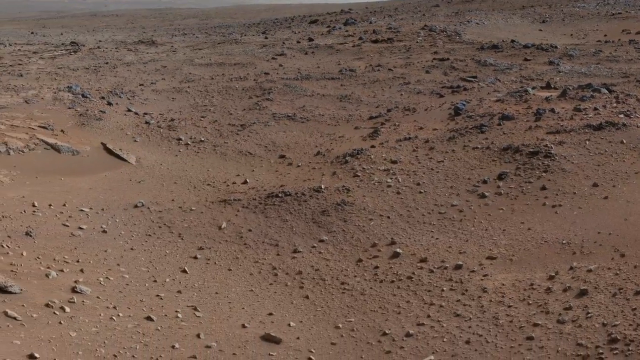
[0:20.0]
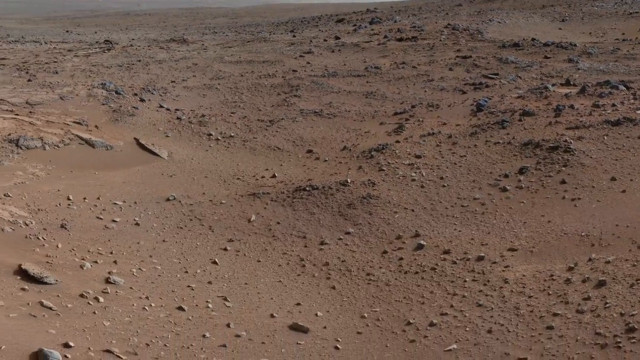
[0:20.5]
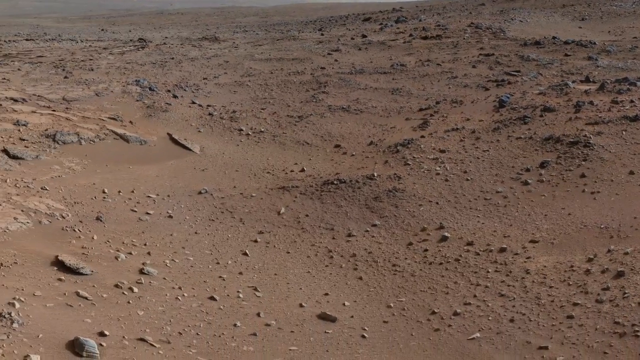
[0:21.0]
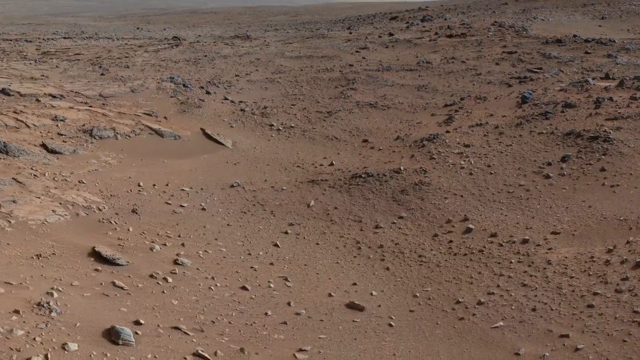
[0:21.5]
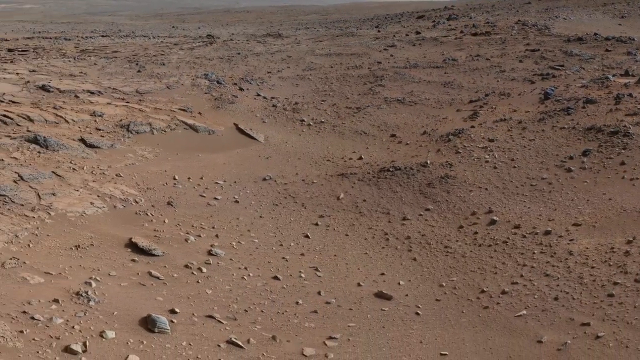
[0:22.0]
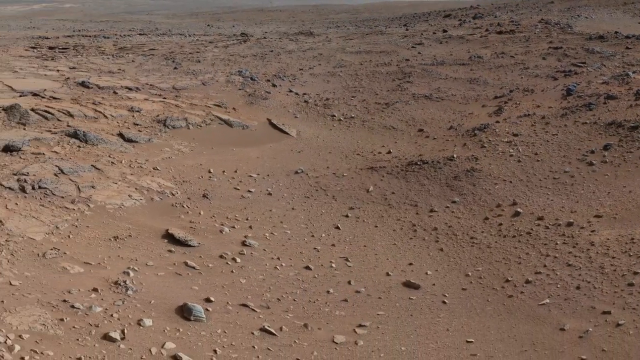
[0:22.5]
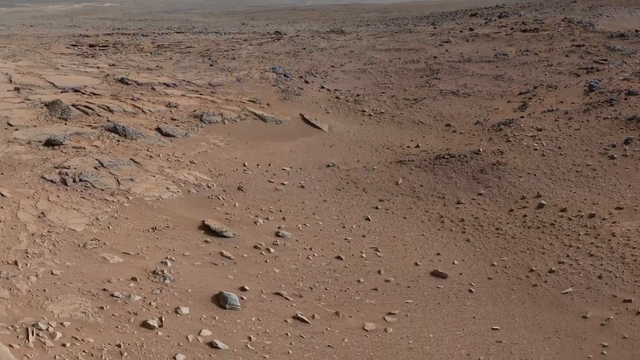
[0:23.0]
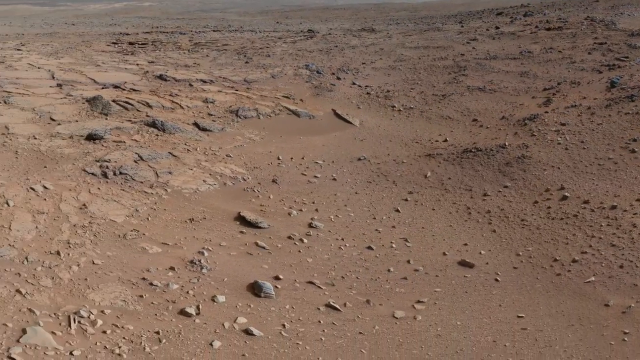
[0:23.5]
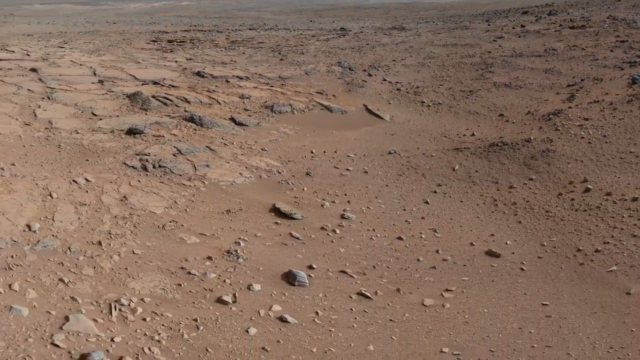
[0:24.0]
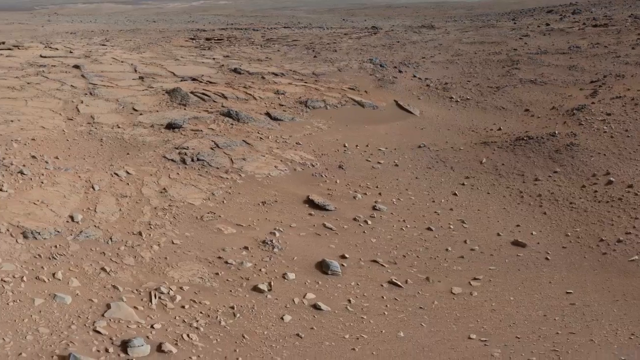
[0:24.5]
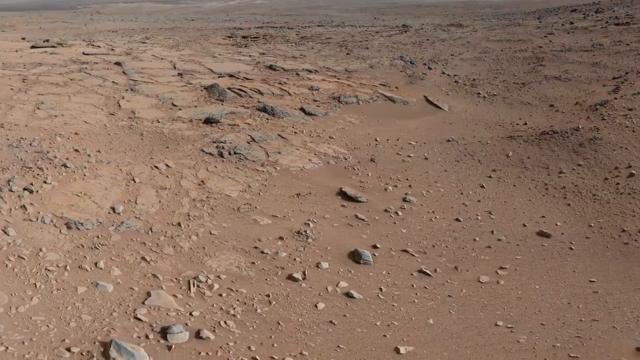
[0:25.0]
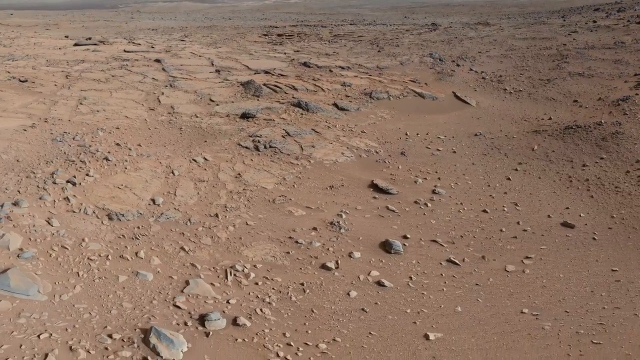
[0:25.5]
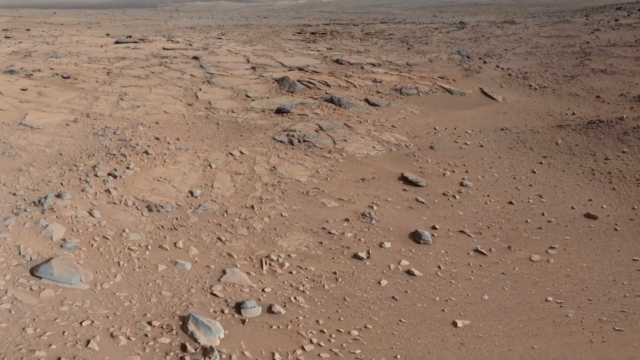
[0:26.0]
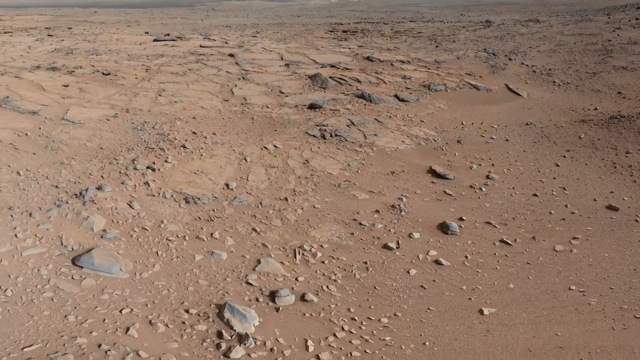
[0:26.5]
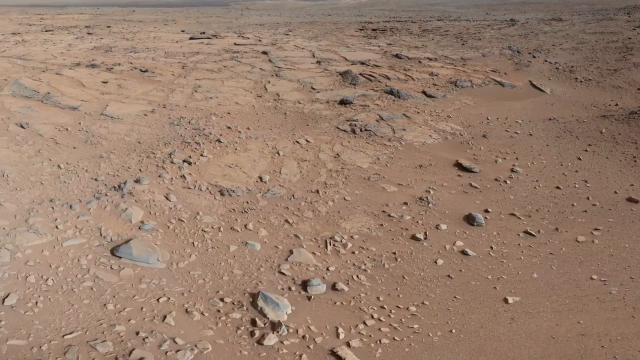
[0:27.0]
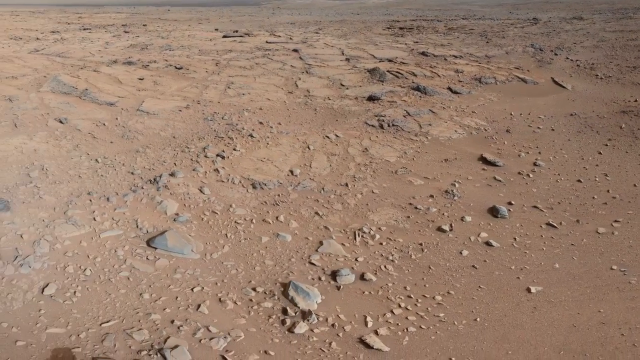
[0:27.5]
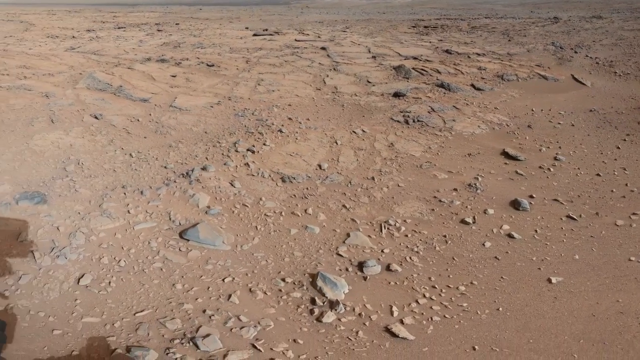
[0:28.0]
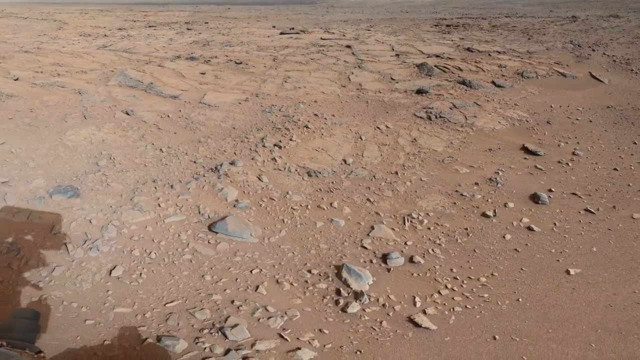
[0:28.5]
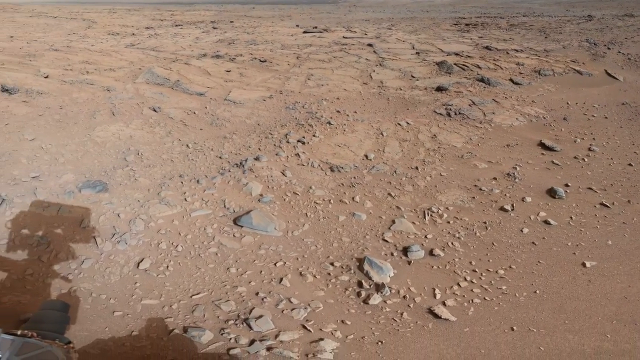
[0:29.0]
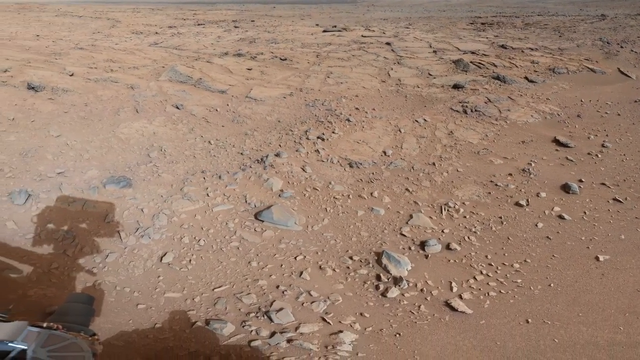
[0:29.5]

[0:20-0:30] The camera pans over Mars, showing a barren field of rocks and dirt. The surface is reddish-dark brown and looks like cobblestone. The picture gets lighter toward the left side, where the sand looks whiter, and in the last moment the rover's shadow is visible at the bottom left.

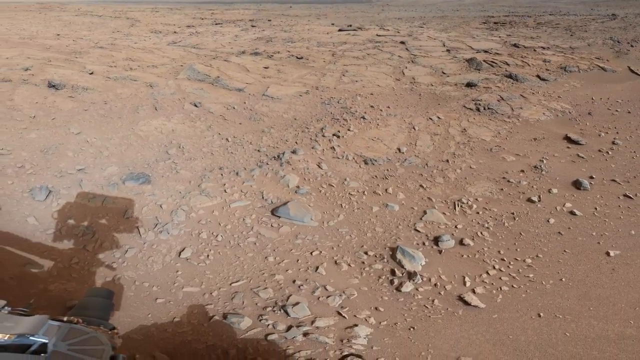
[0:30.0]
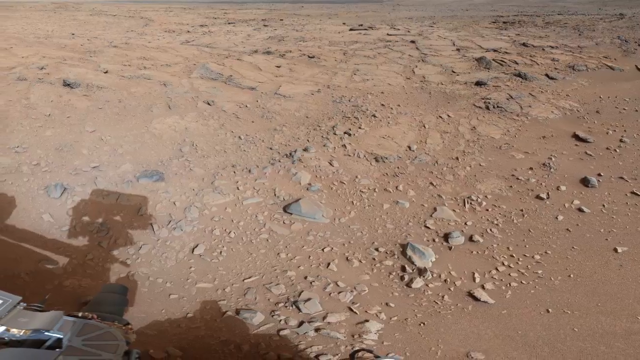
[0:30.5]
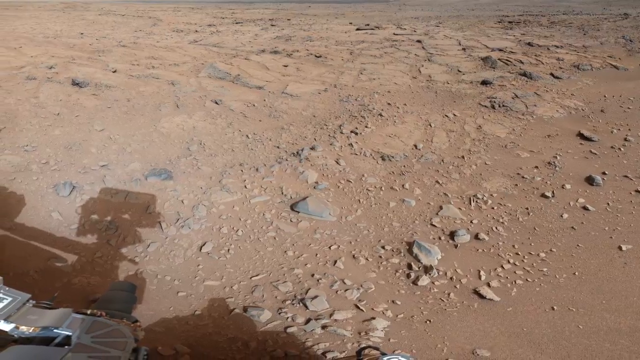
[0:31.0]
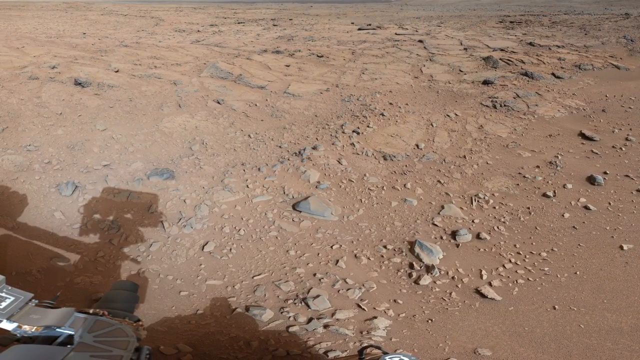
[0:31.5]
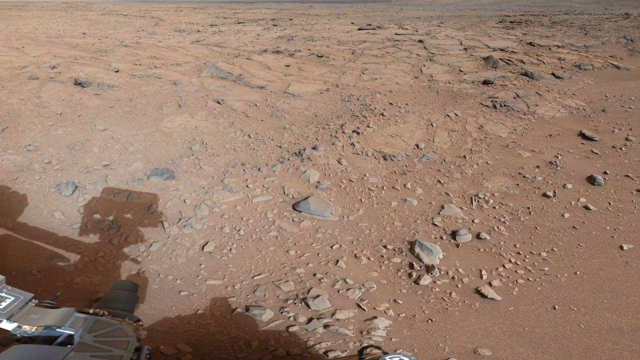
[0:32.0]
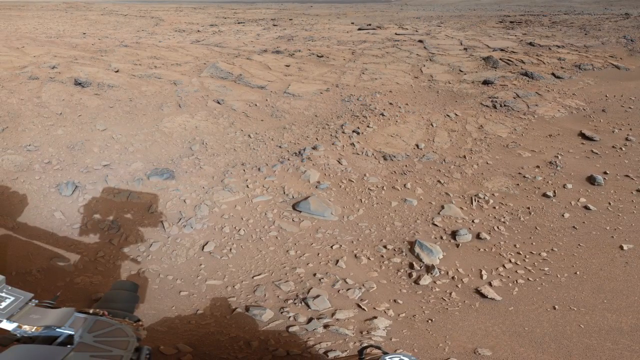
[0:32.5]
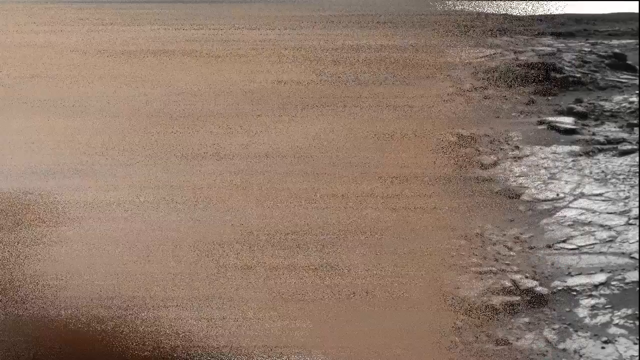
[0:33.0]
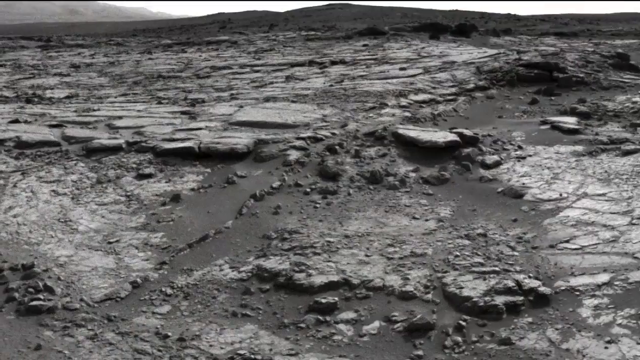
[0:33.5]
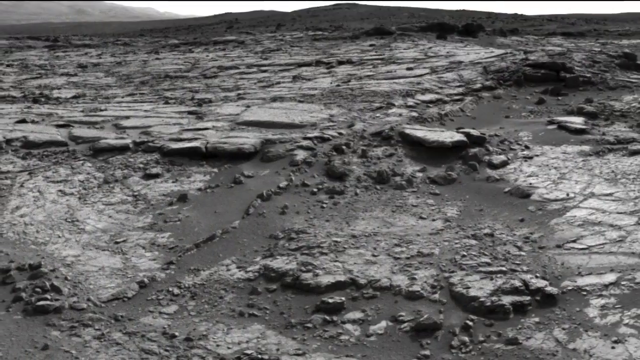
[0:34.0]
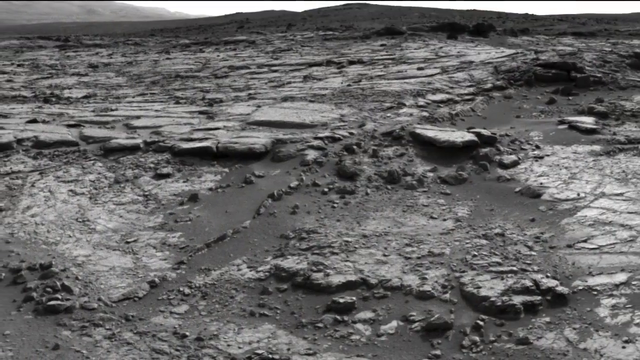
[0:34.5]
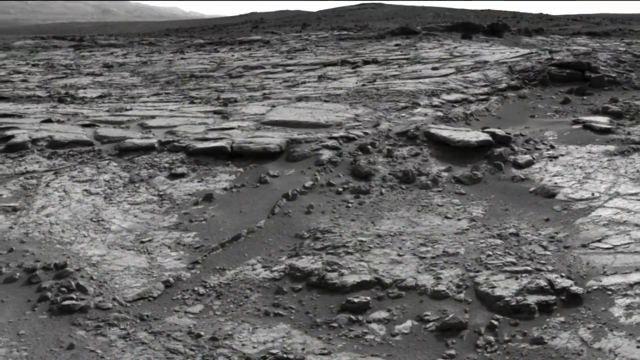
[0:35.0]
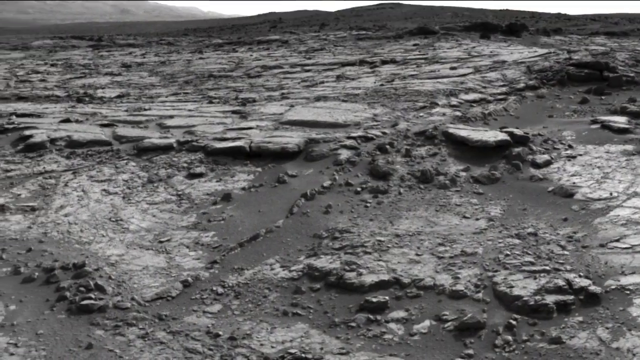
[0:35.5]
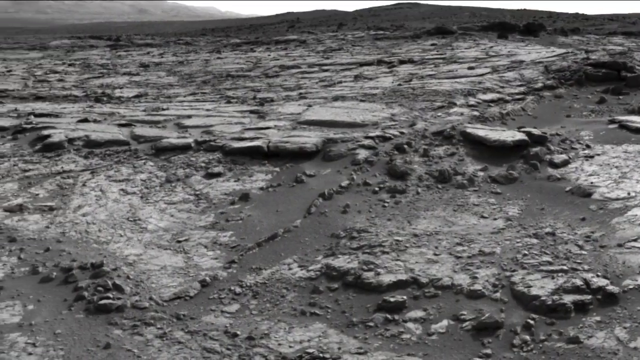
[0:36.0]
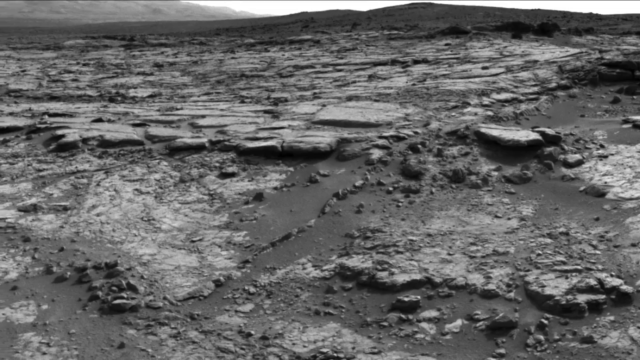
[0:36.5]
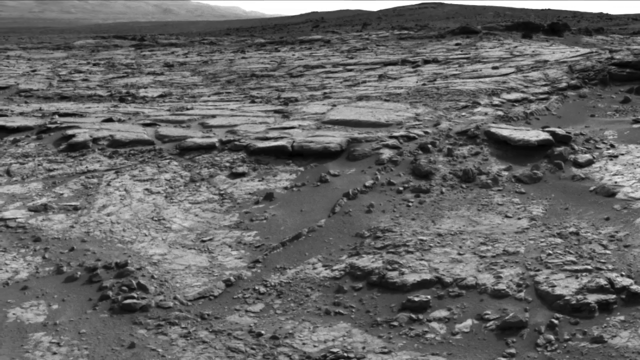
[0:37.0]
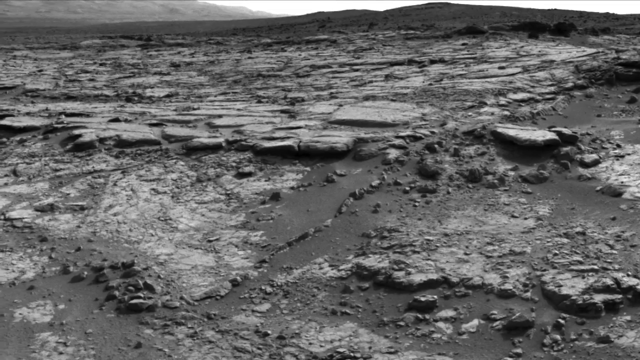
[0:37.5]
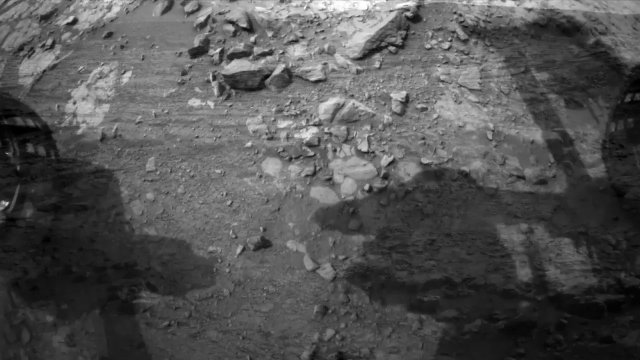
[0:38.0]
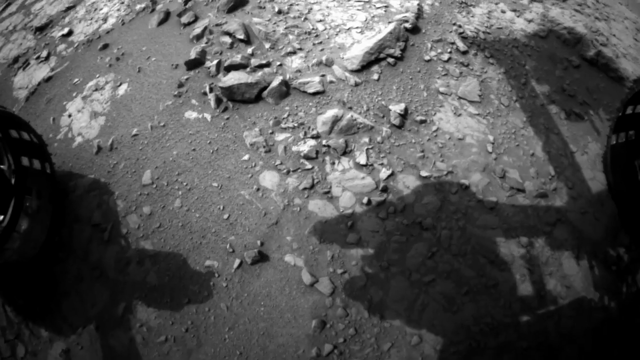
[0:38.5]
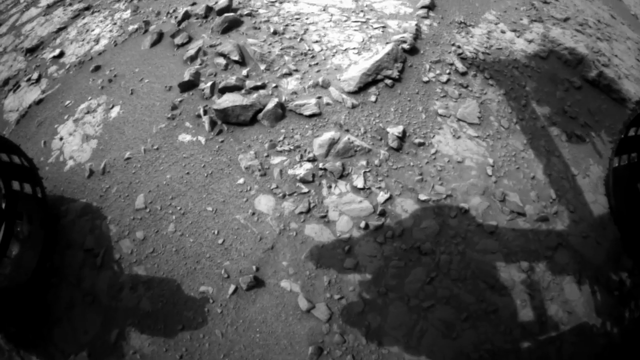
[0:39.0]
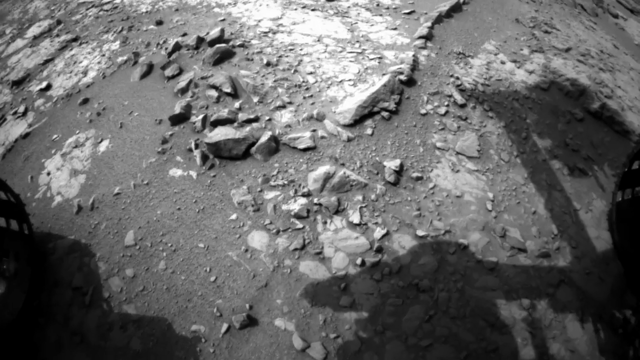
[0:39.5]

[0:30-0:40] At the start, more of the rover's shadow is visible toward the bottom left of the picture. The image pauses, then switches to a black-and-white image of the Martian surface, which seems to have more rock, more granite. Another black-and-white picture shows the rover's shadow, which is kind of big, and there are a lot of rocks. The video then goes back to the initial picture.